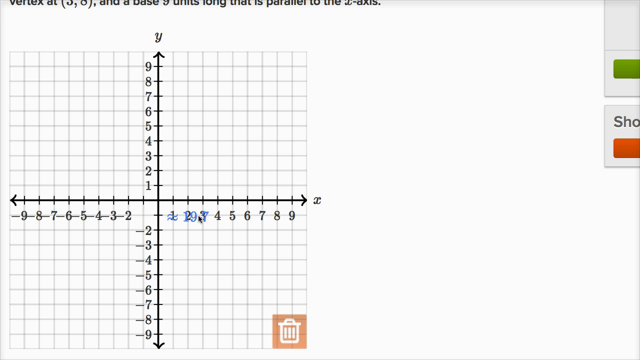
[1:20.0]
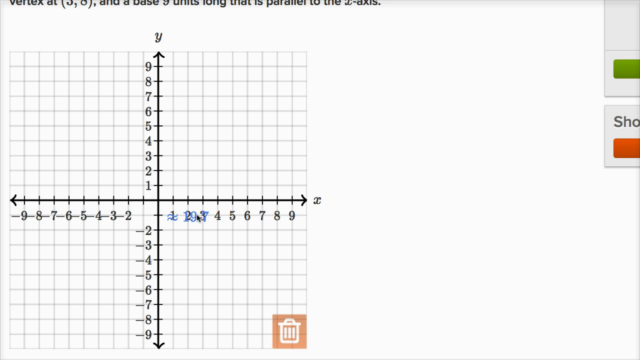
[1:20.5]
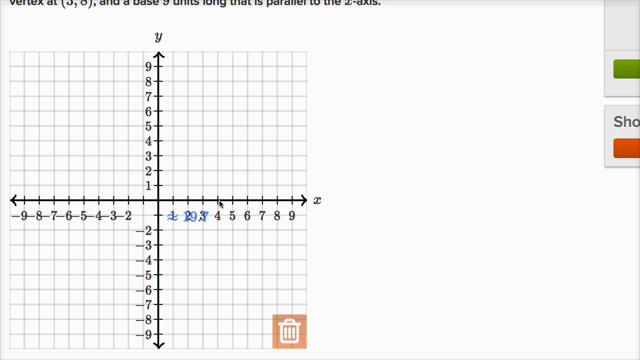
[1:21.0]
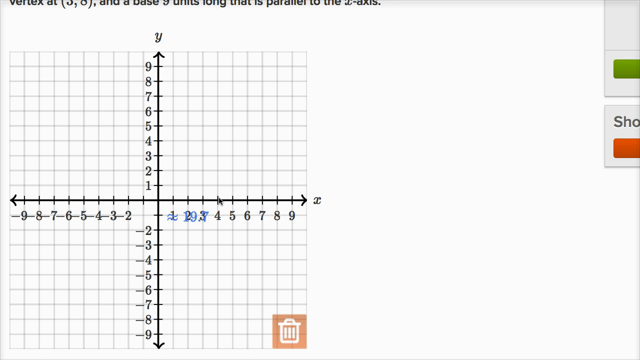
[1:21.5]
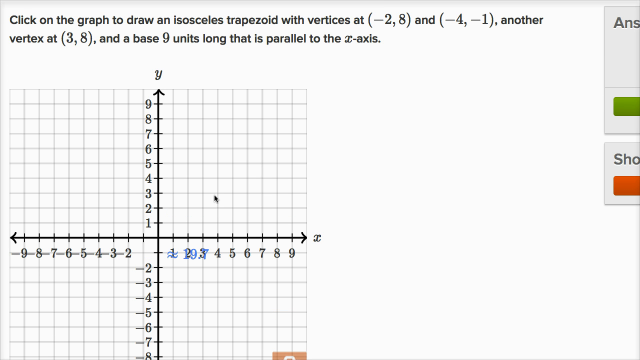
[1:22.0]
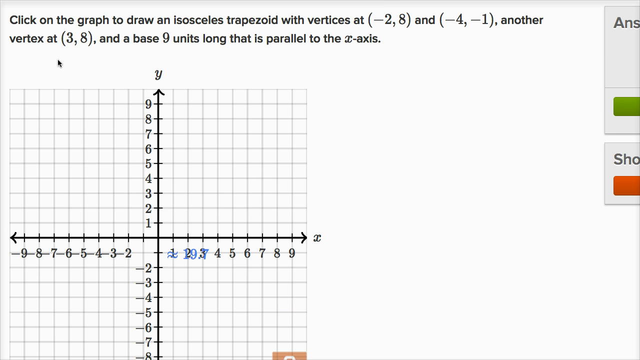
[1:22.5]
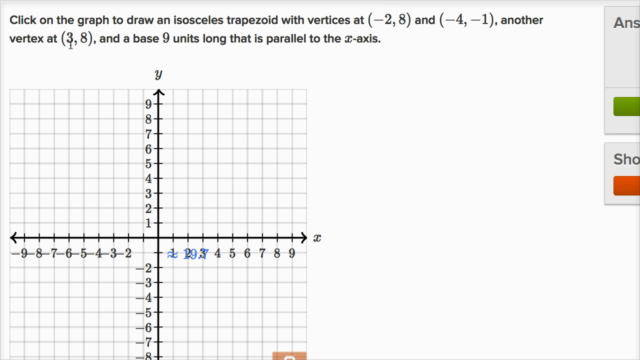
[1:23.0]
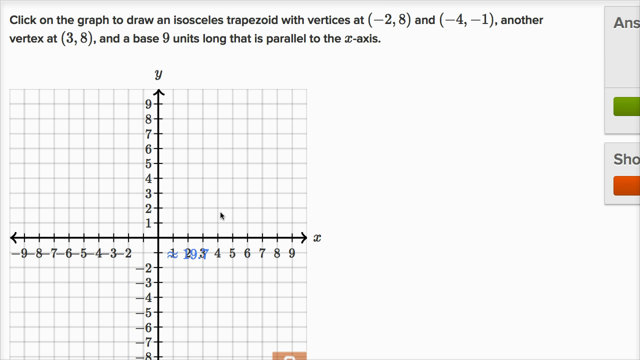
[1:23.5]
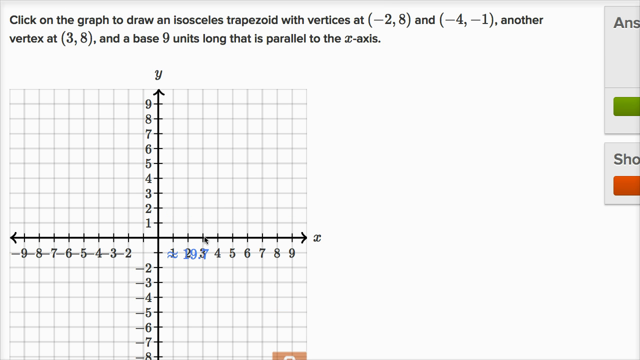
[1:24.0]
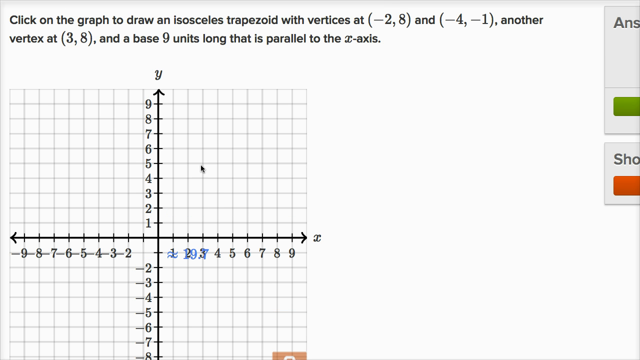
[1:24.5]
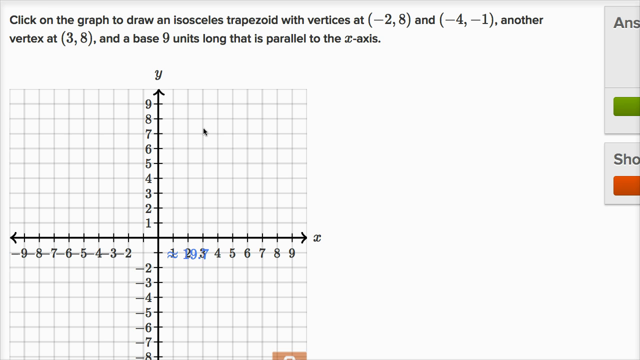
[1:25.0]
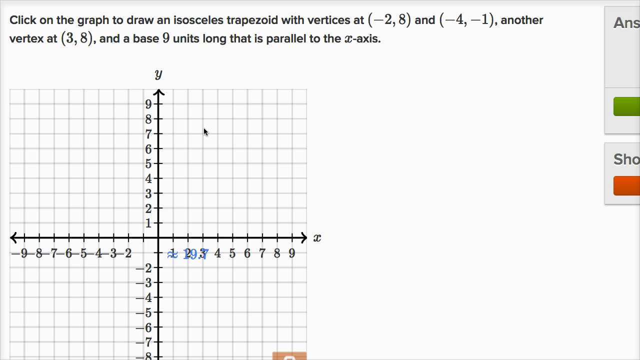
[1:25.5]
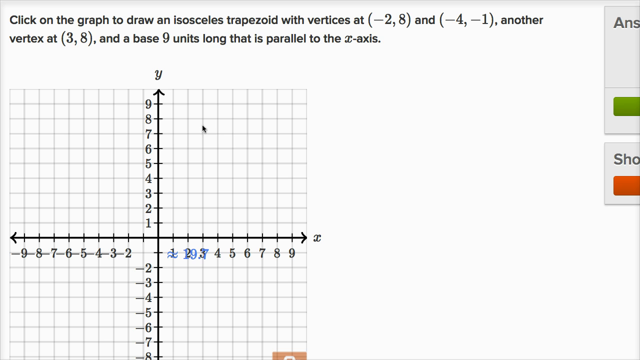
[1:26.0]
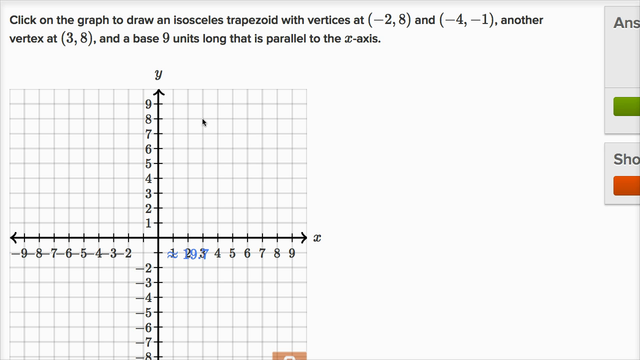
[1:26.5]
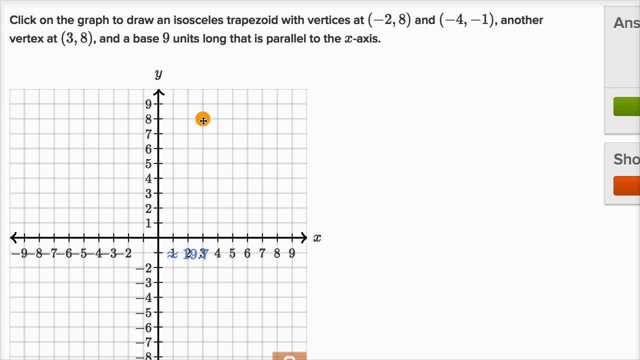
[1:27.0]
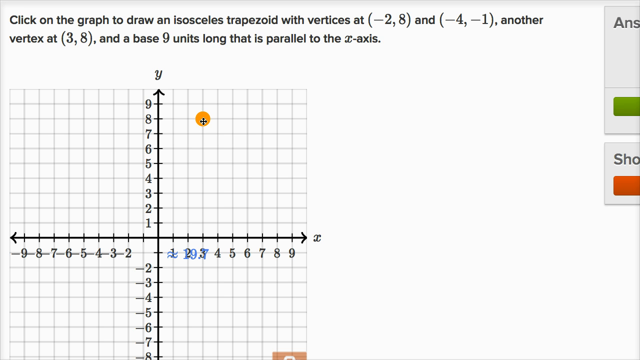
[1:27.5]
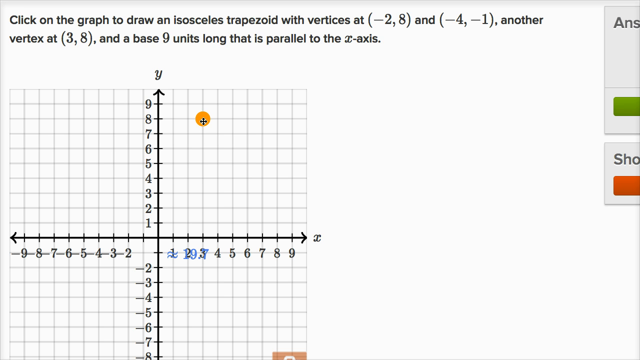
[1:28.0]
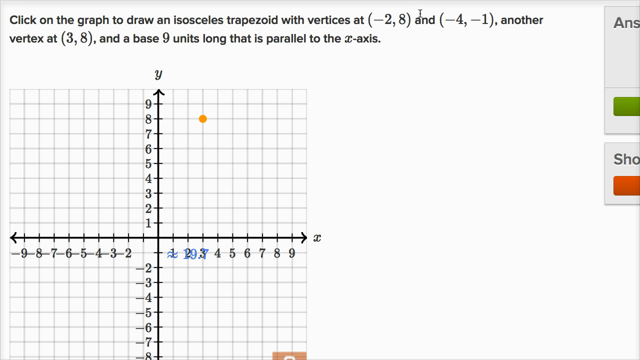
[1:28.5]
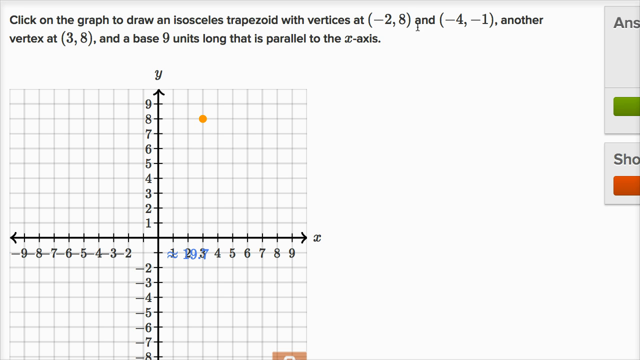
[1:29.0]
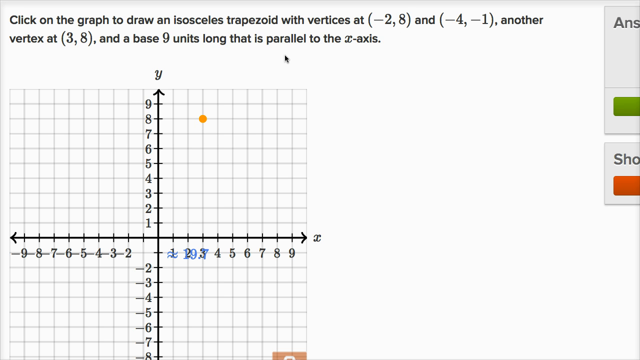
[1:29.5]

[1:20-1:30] The graph is still being drawn, and a small dot is placed close to the X. The numbers are visible on the graph, with 1 at the bottom. The vertices listed are (-2, 8) and (-4, -1), with a vertex at (3, 8) and a base parallel to the x-axis.